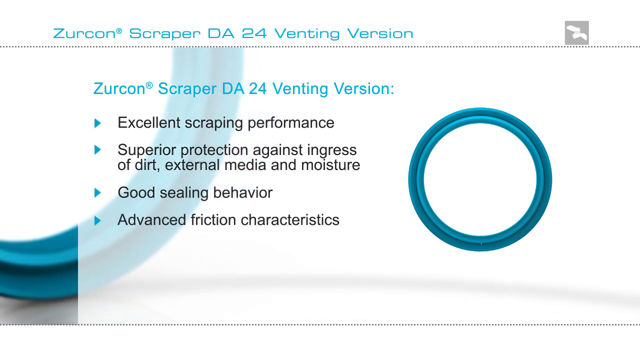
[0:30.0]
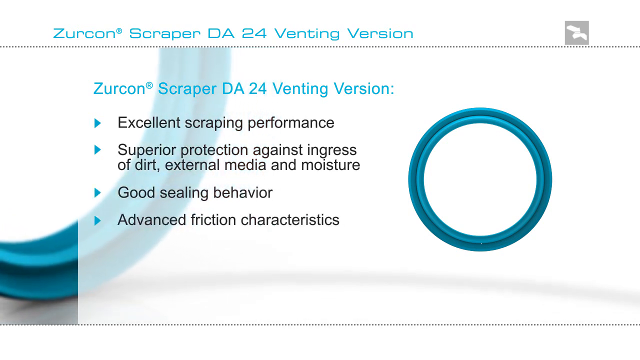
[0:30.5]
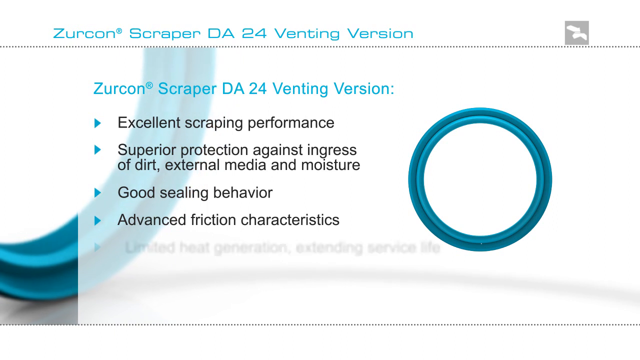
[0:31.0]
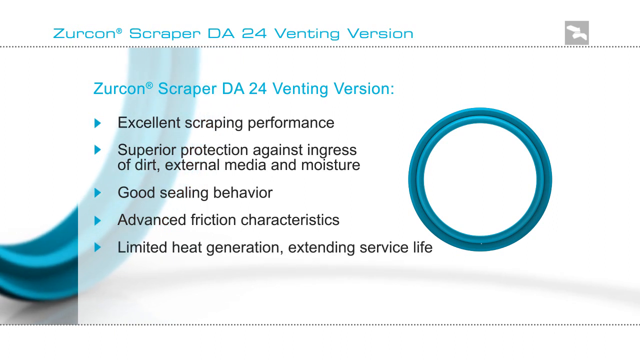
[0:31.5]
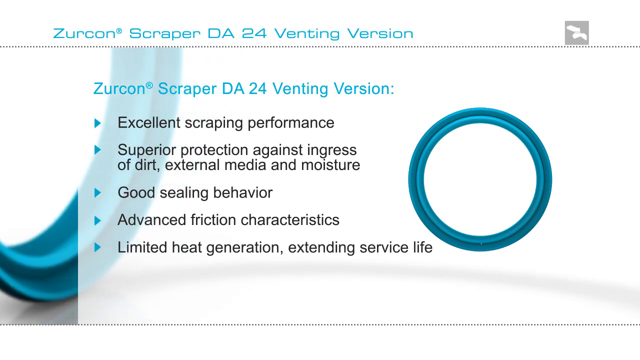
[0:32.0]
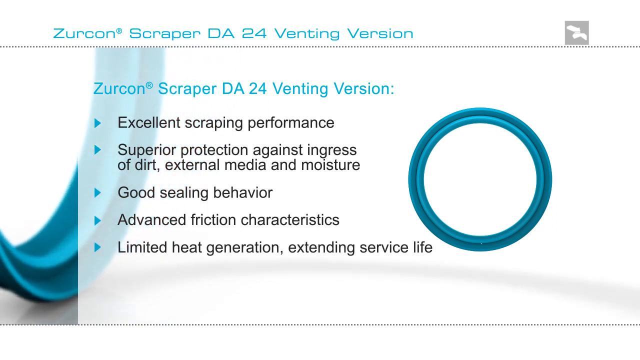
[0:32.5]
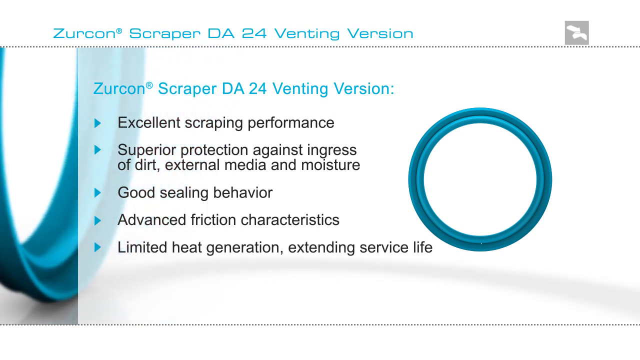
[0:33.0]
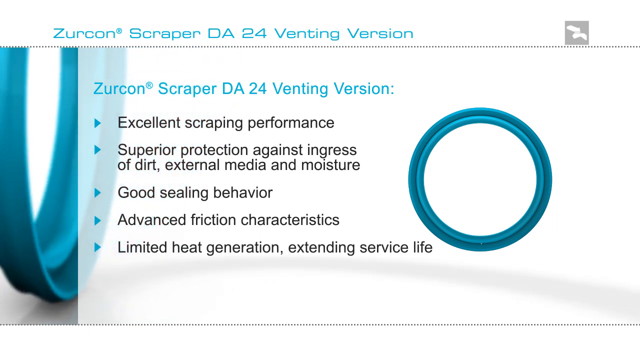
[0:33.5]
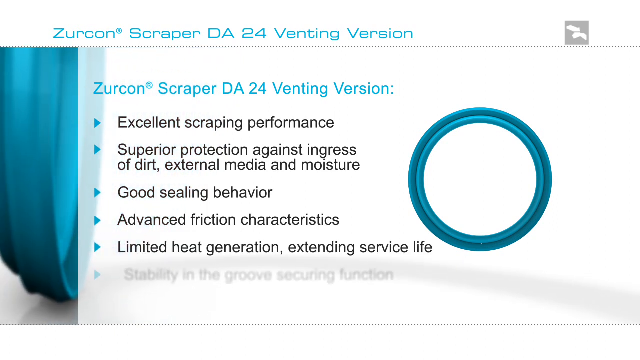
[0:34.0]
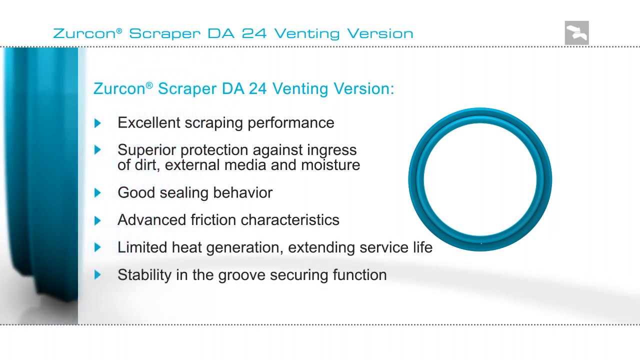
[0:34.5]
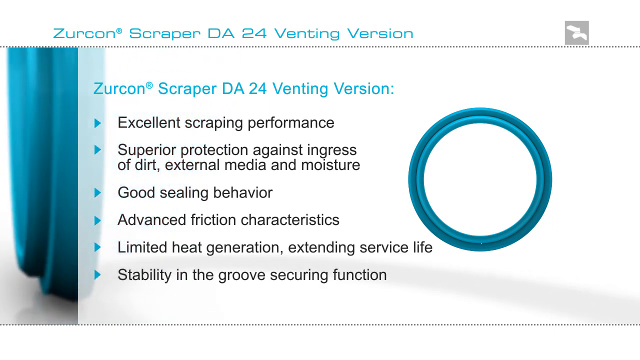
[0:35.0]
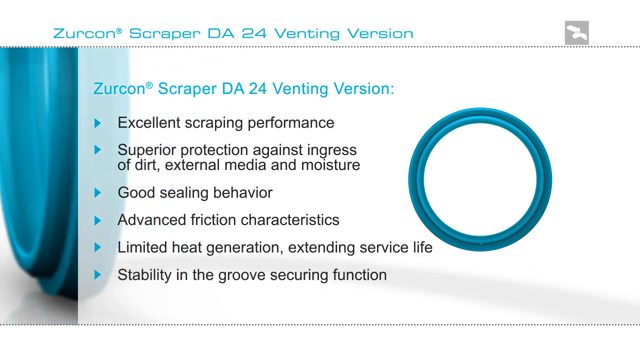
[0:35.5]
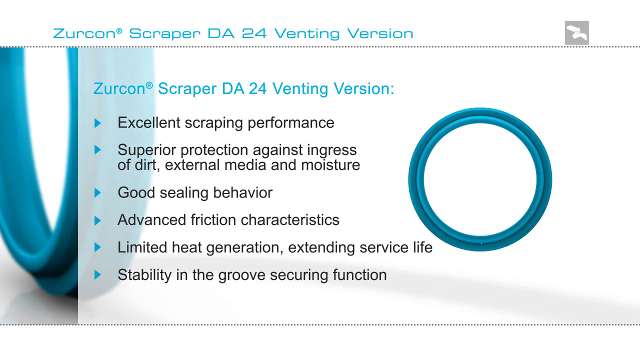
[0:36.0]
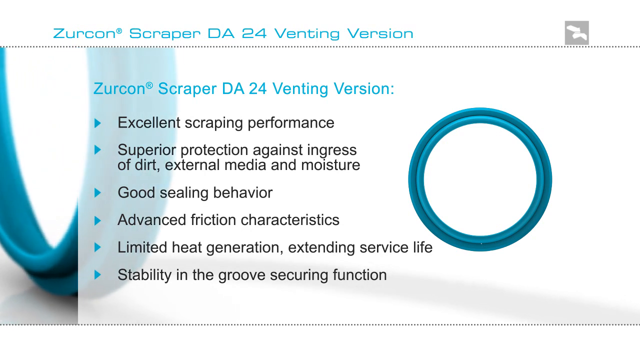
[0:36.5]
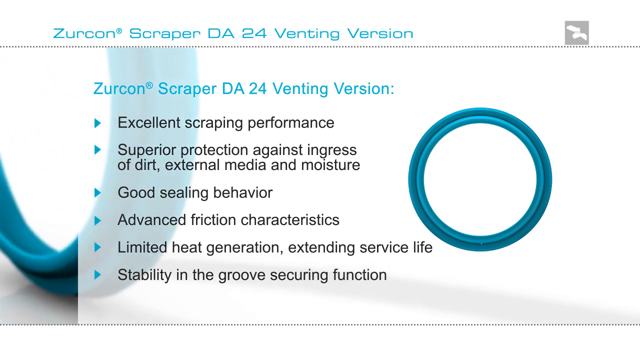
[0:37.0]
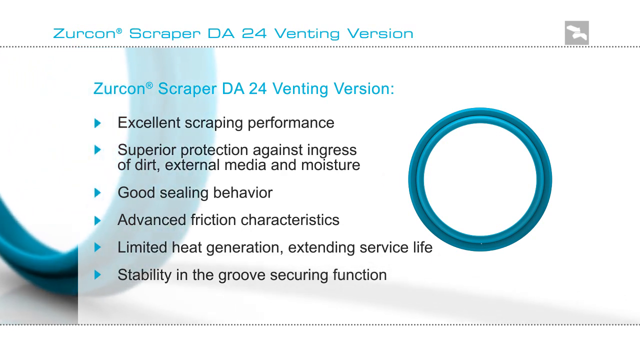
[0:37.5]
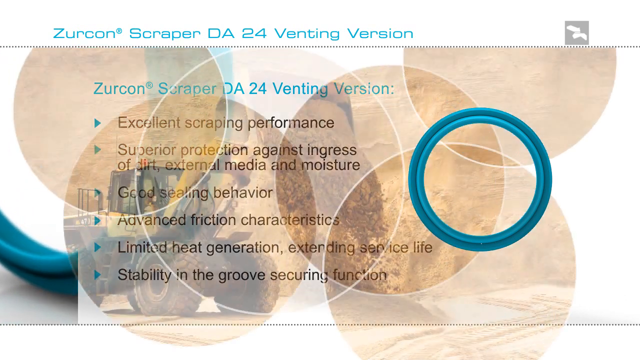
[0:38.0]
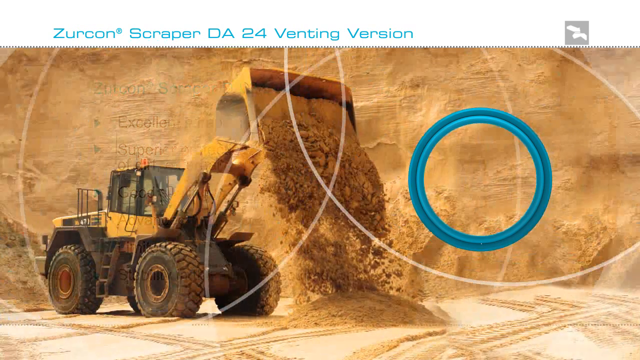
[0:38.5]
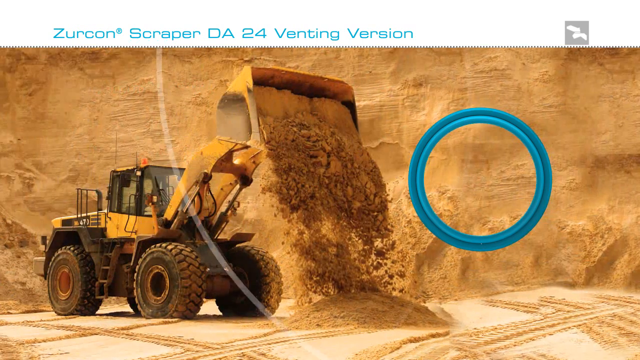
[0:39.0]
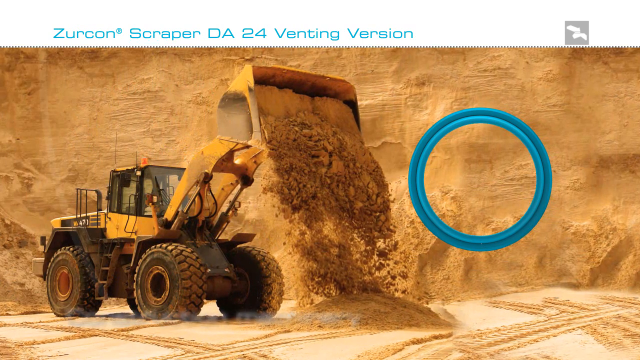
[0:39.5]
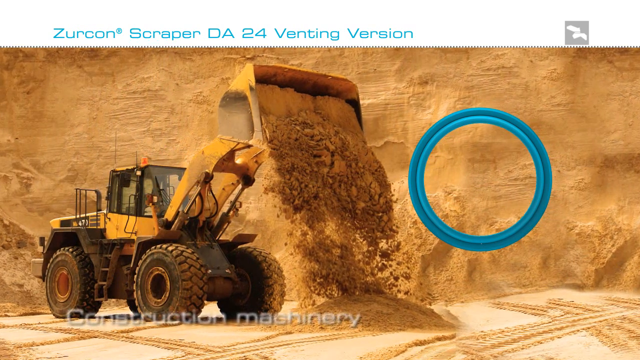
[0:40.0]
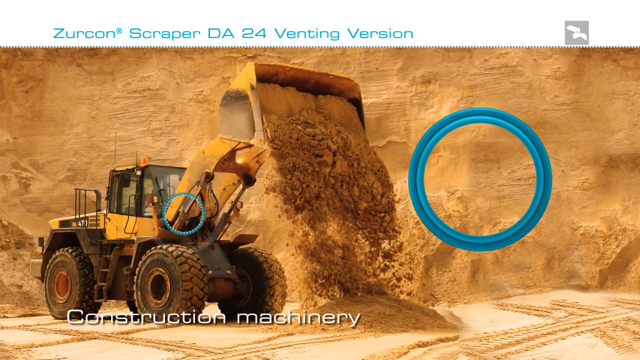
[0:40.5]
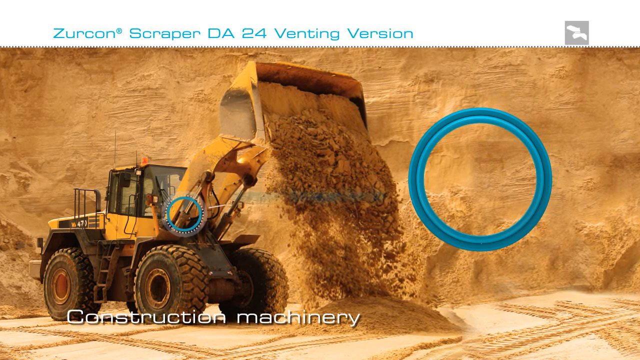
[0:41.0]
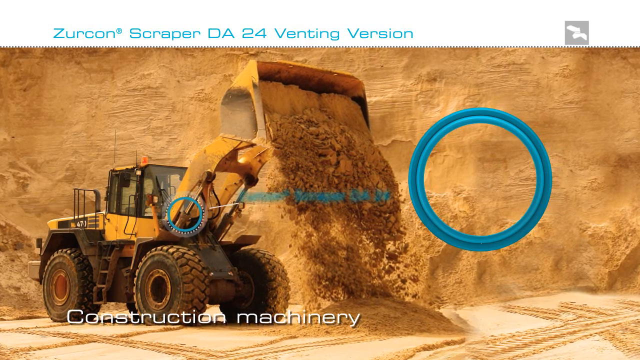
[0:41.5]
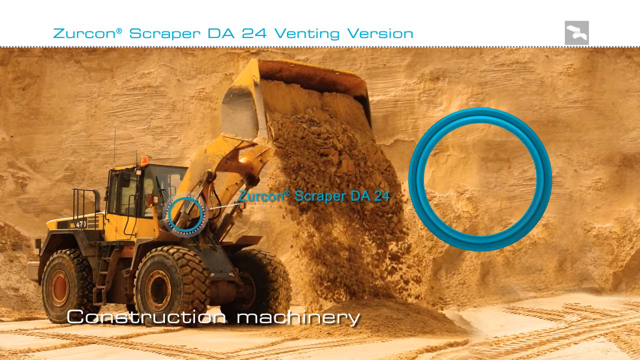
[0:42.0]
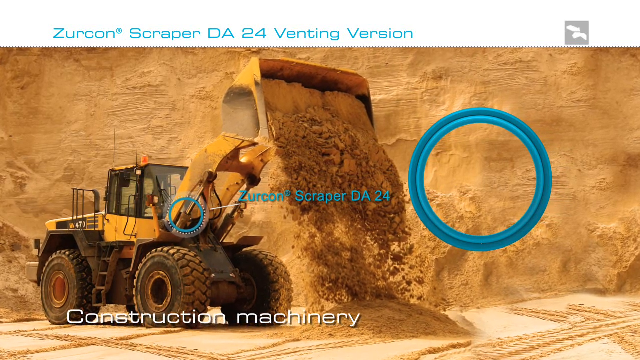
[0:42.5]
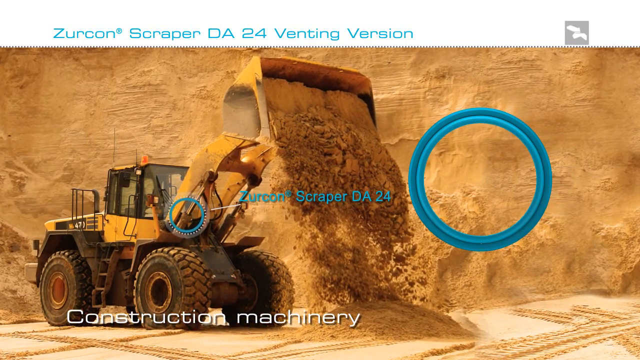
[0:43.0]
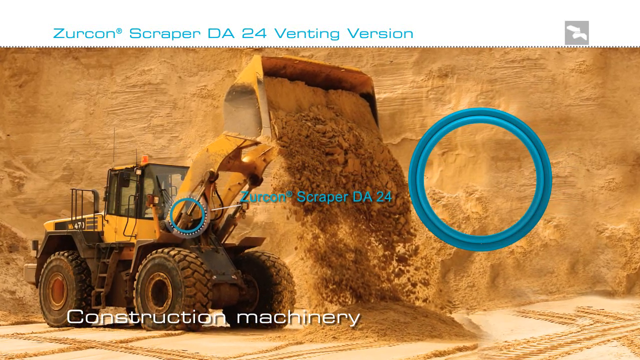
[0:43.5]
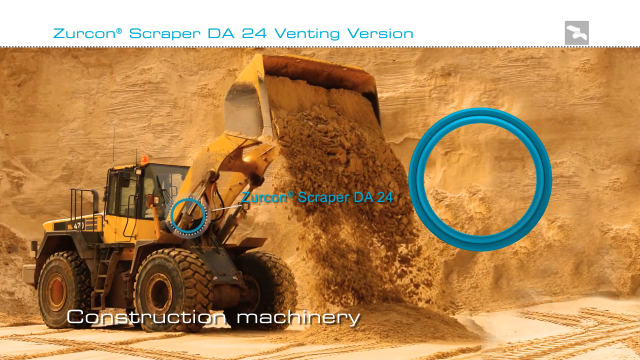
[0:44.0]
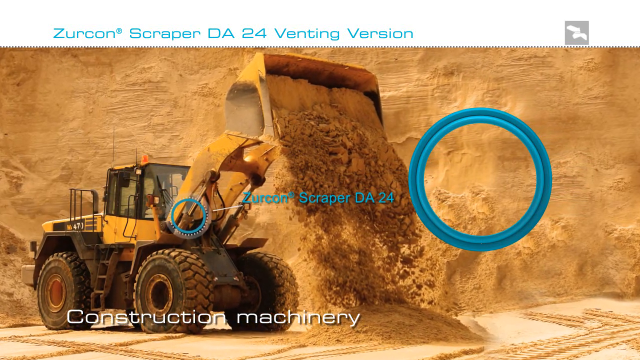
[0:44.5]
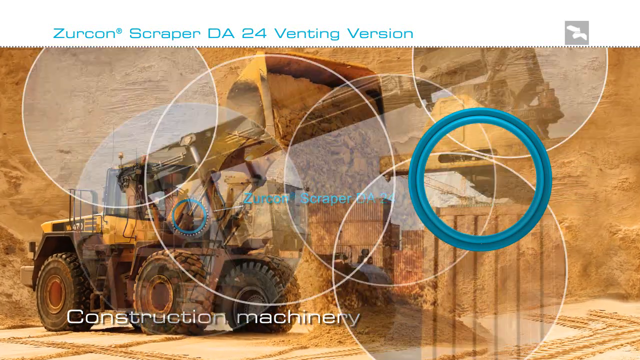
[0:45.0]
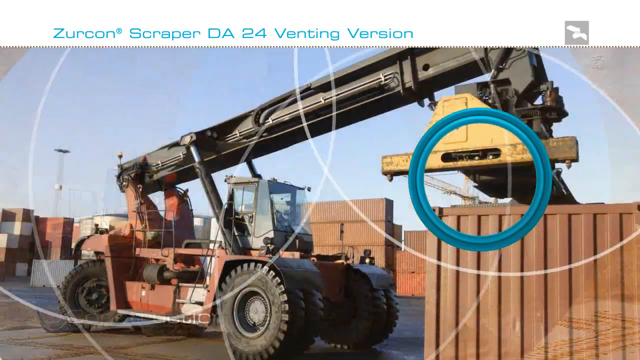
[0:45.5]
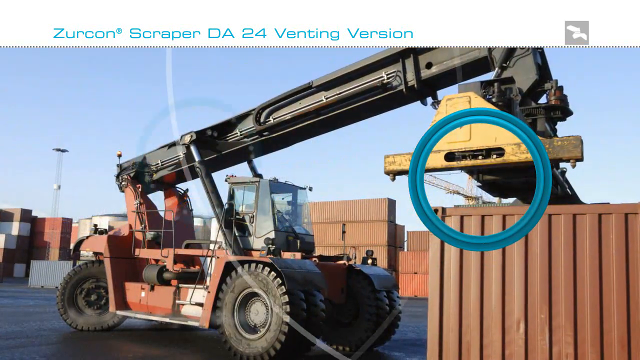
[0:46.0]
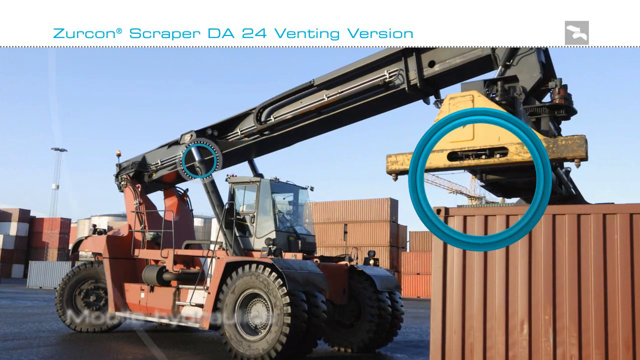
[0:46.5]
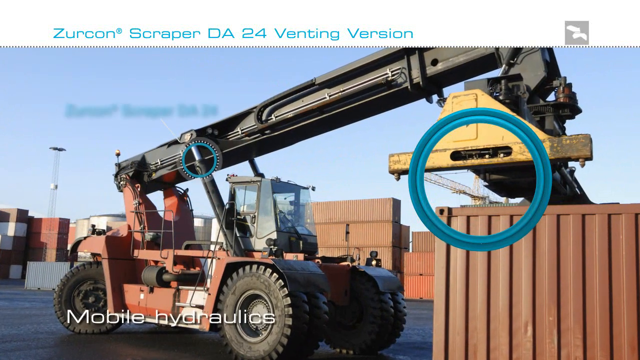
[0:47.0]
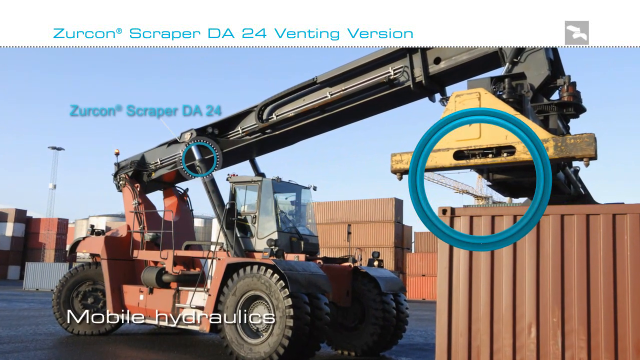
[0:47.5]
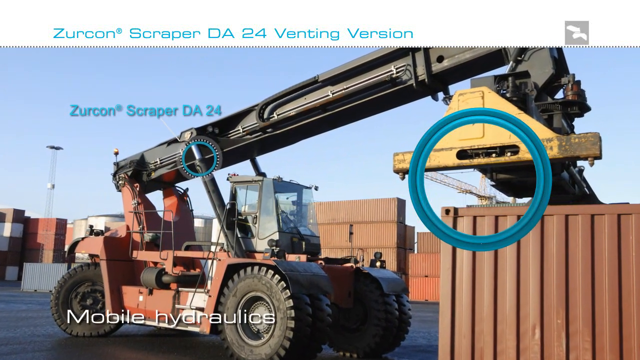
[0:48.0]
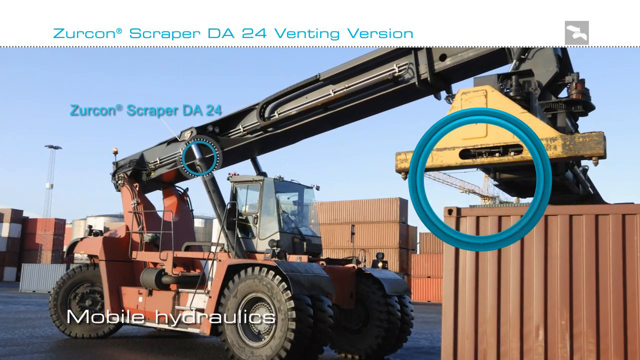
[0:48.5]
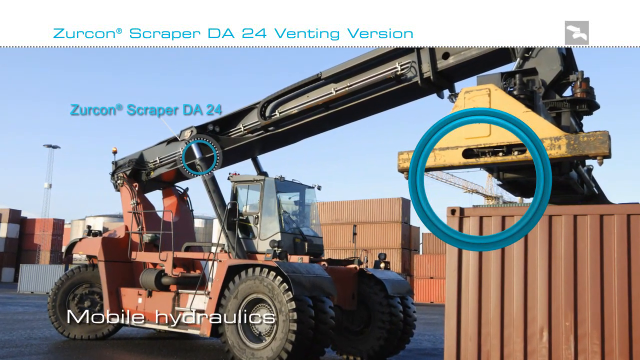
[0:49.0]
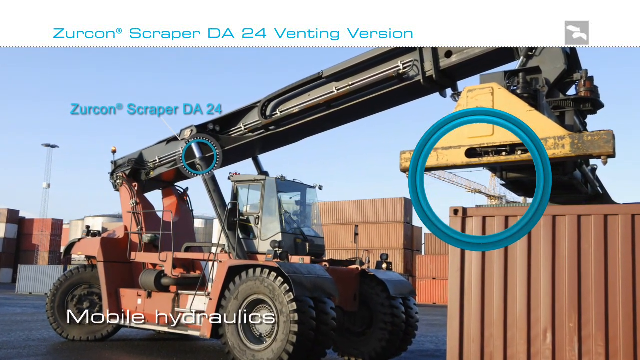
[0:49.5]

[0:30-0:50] A slide shows a light blue title reading "Zircon Scraper DA24 venting version", with black subtitle text underneath, listed beside bullet points on the left that look like light blue triangles. On the right is a light blue circle with a darker light blue circle around it, sort of bordering it. The background is white, and another, larger circle on the left side appears to be rotating on a white surface. The video cuts to what looks like a yellow construction truck picking up dirt and dumping it on the floor, with a big mountain covered in dirt in the background. It then cuts to another tractor with a huge black arm on top.